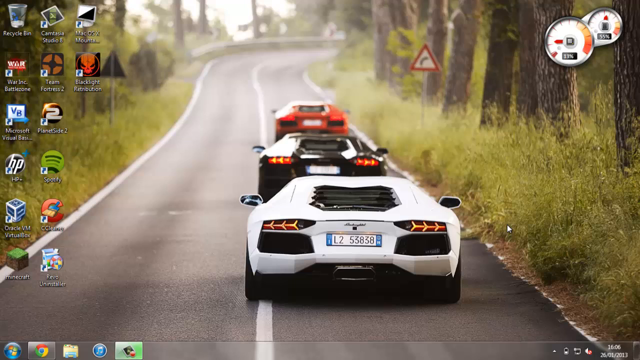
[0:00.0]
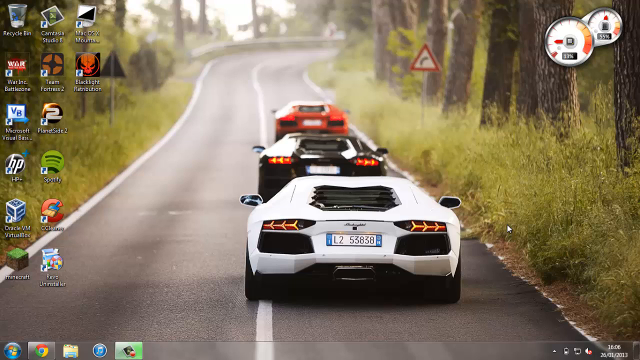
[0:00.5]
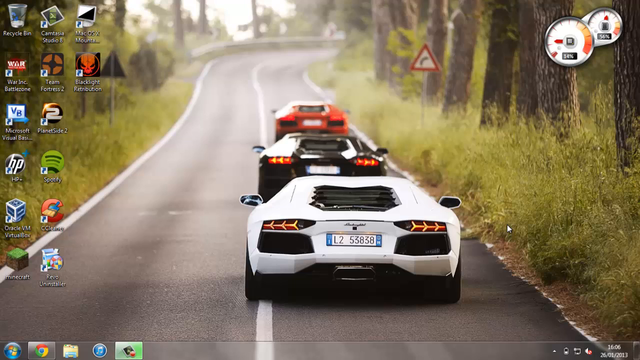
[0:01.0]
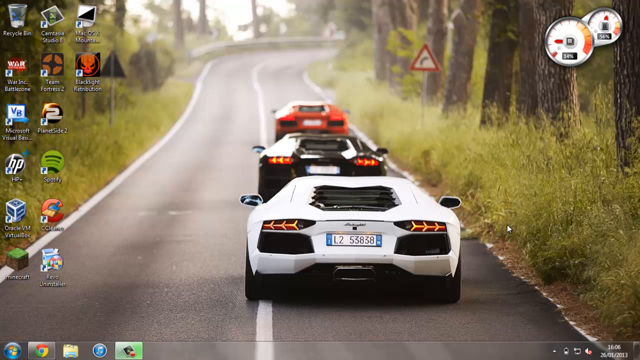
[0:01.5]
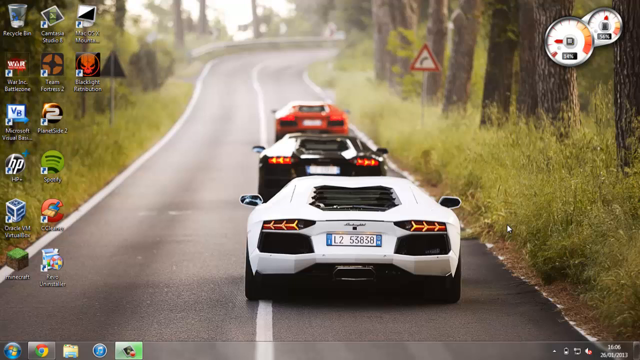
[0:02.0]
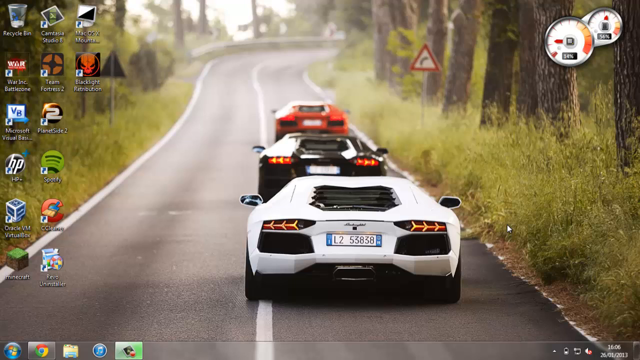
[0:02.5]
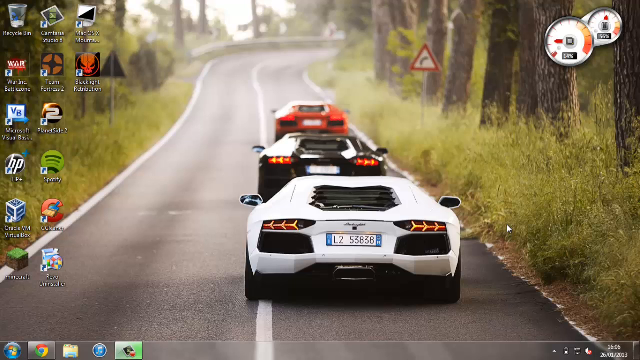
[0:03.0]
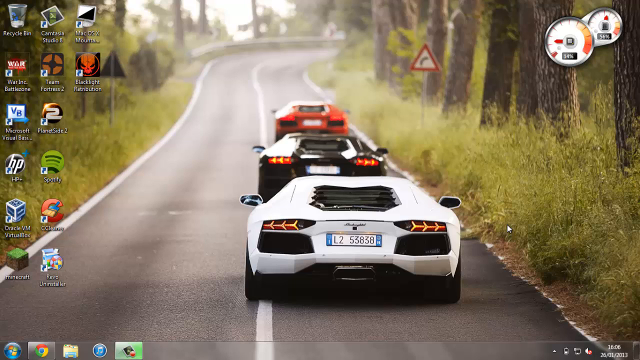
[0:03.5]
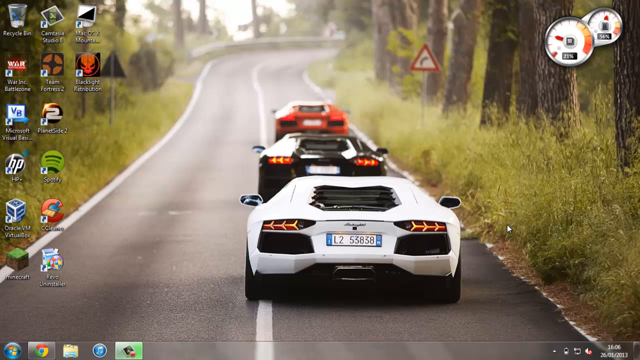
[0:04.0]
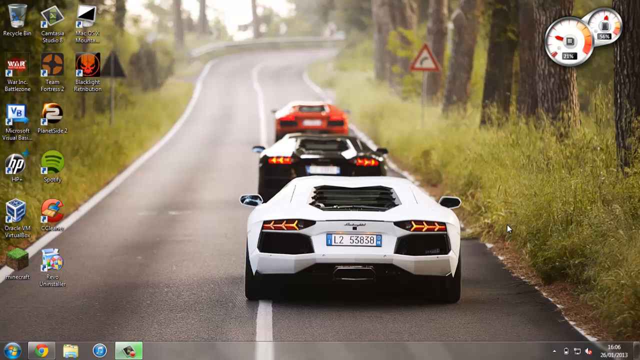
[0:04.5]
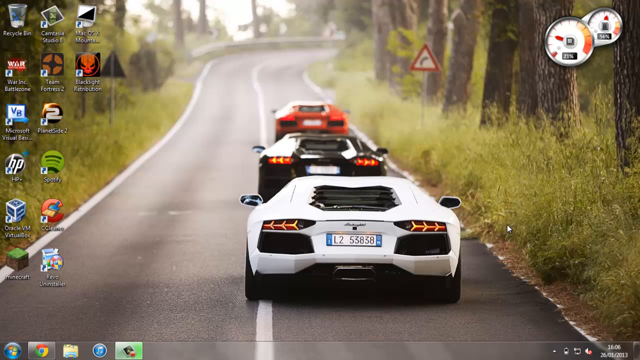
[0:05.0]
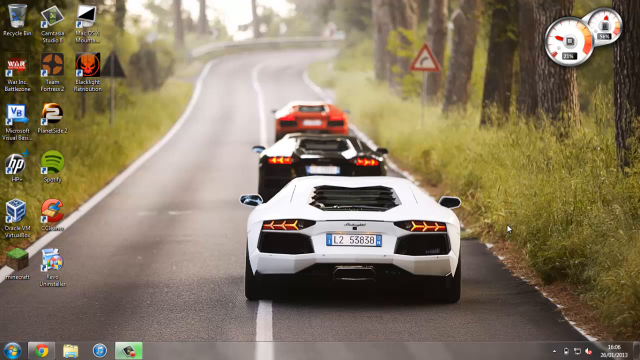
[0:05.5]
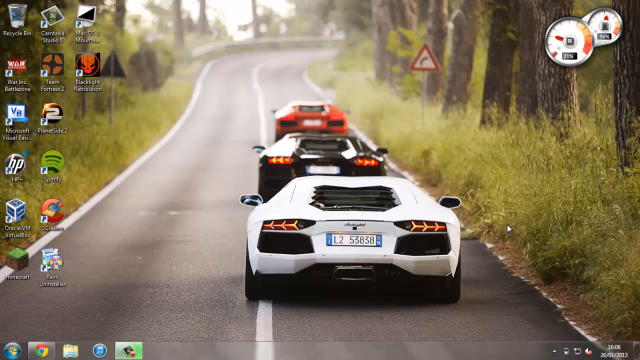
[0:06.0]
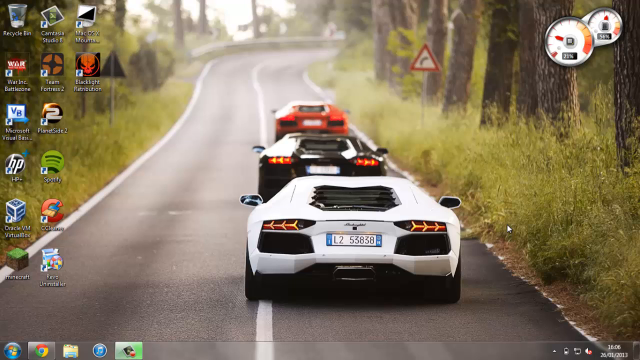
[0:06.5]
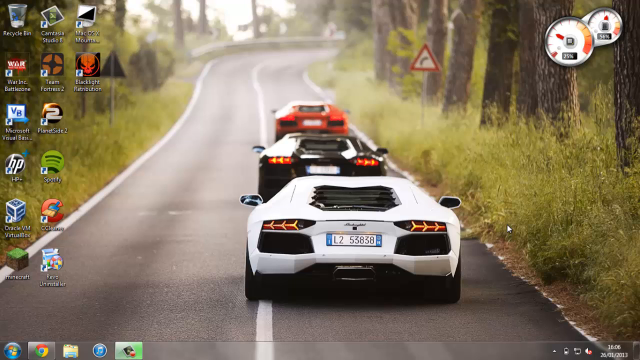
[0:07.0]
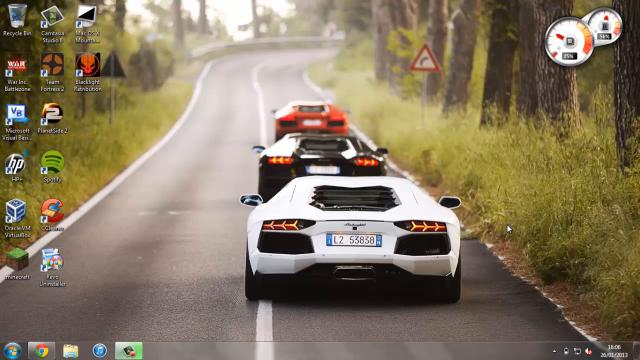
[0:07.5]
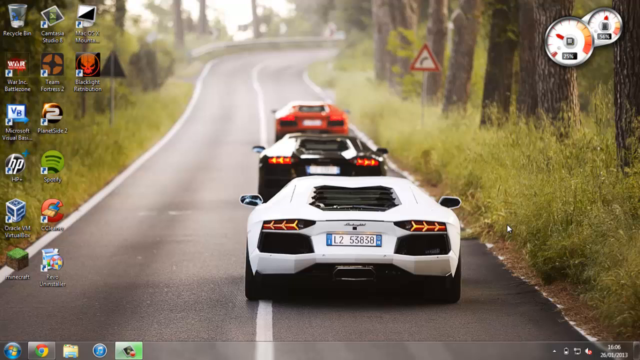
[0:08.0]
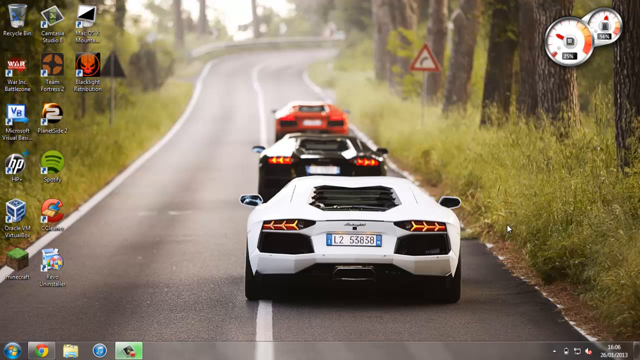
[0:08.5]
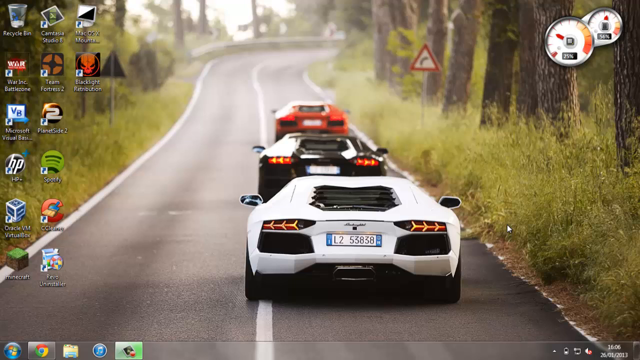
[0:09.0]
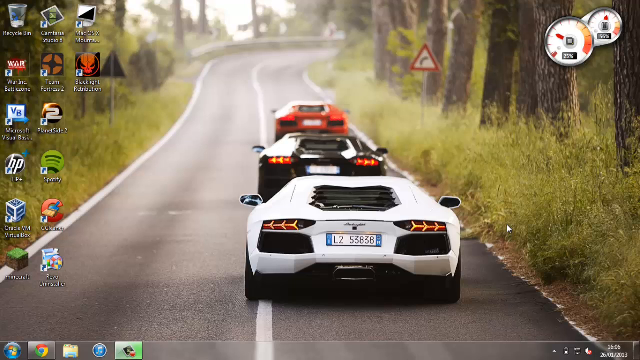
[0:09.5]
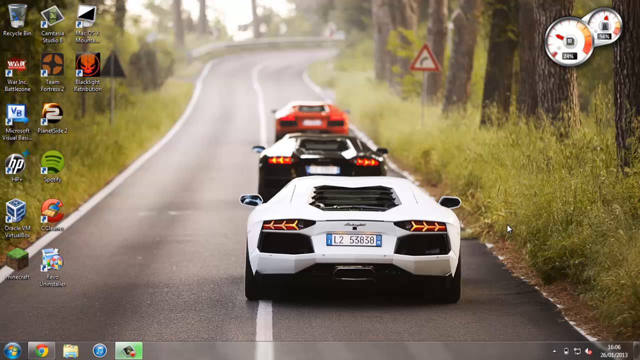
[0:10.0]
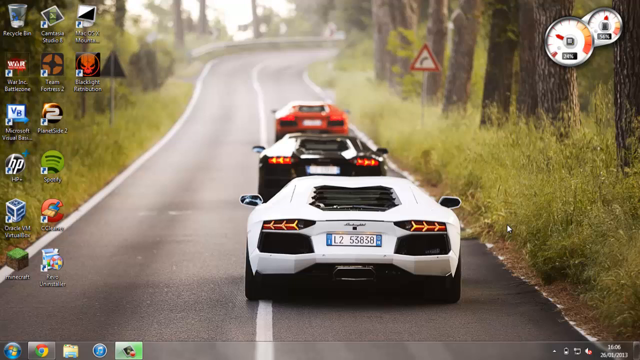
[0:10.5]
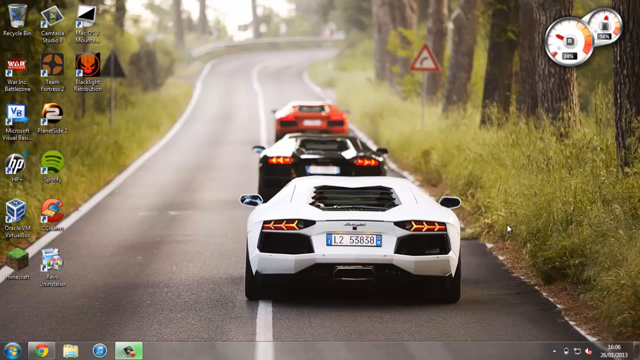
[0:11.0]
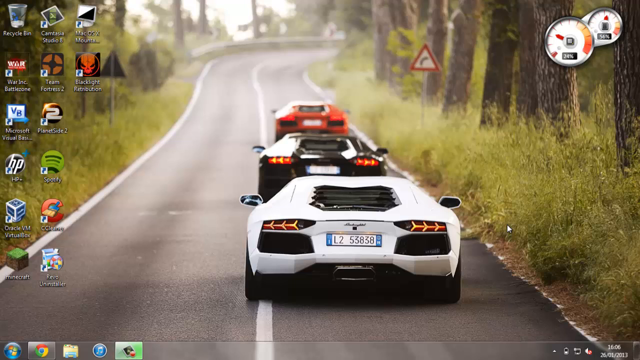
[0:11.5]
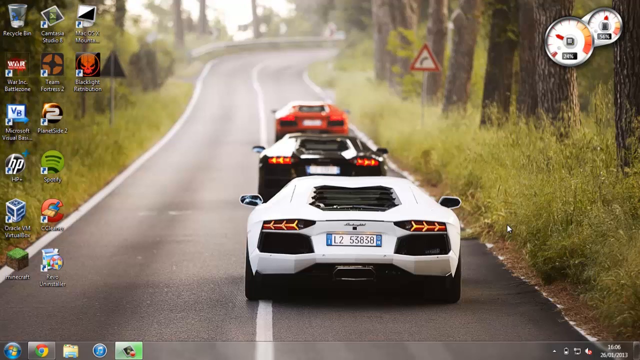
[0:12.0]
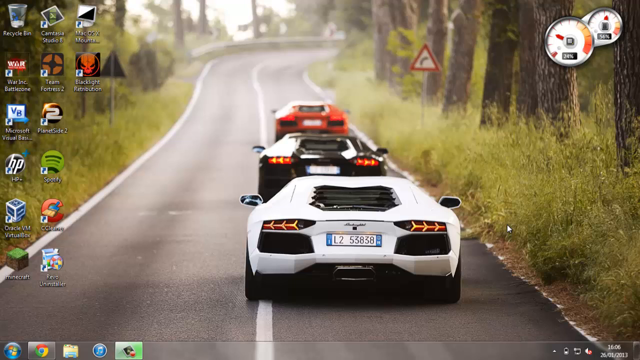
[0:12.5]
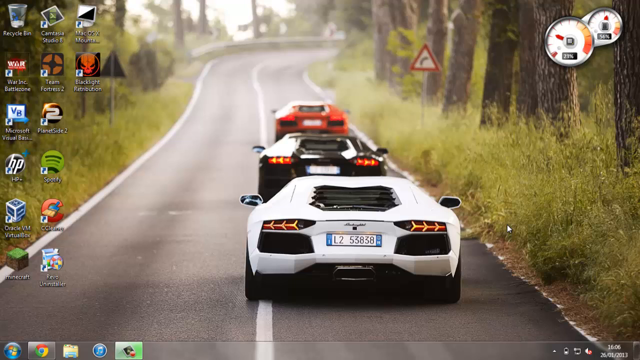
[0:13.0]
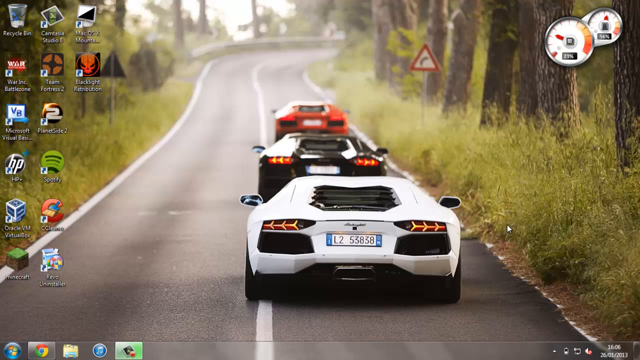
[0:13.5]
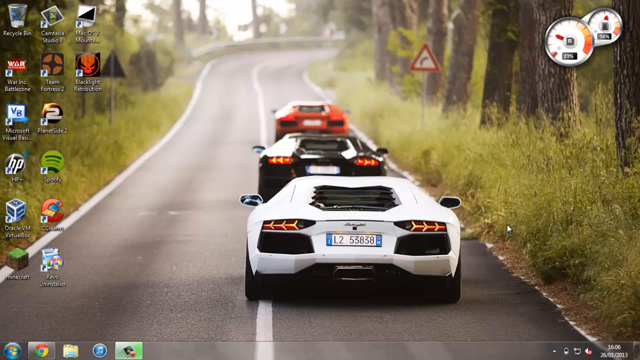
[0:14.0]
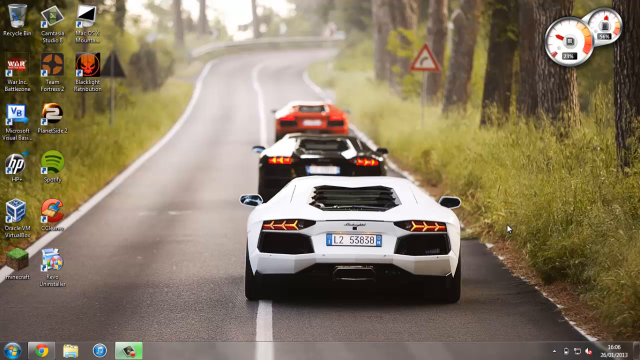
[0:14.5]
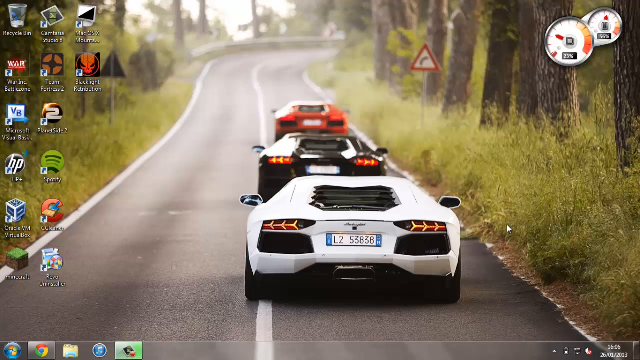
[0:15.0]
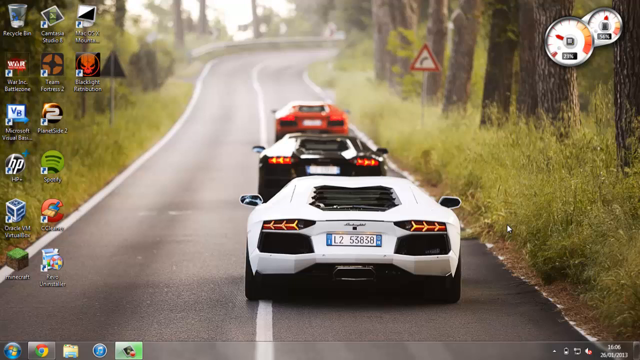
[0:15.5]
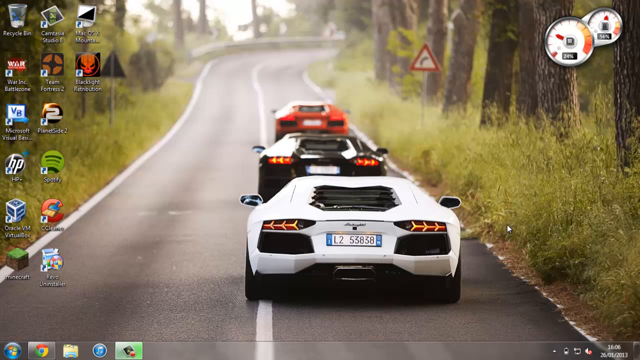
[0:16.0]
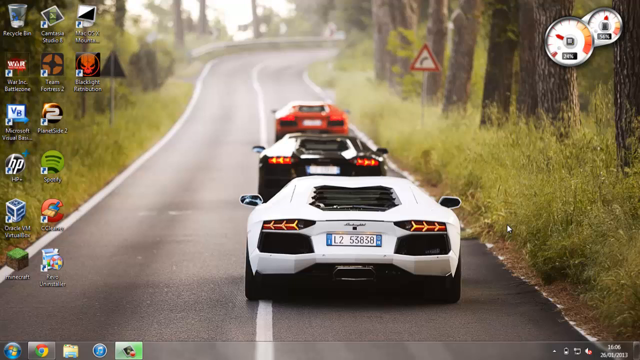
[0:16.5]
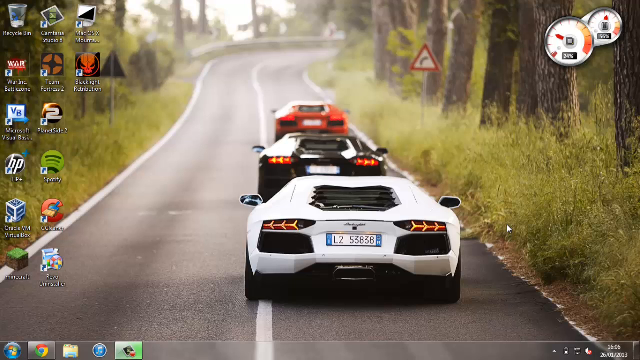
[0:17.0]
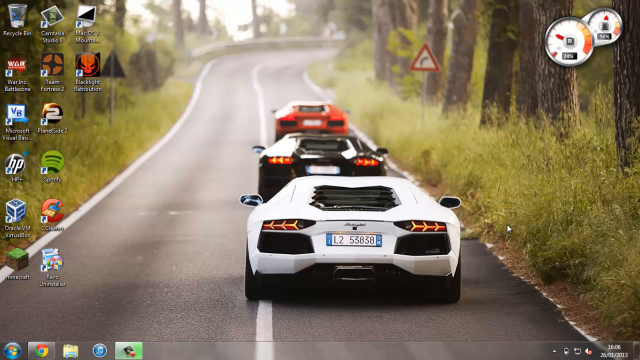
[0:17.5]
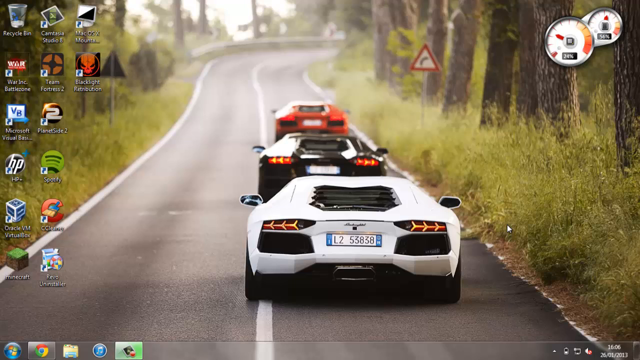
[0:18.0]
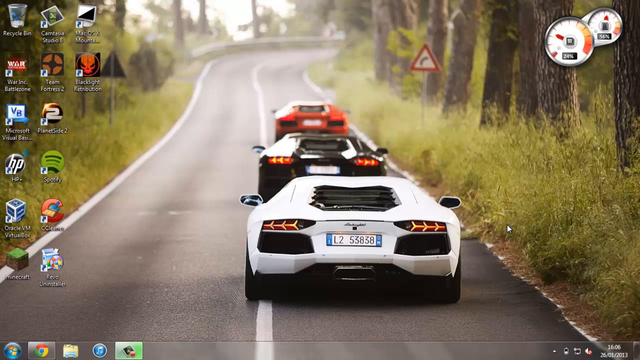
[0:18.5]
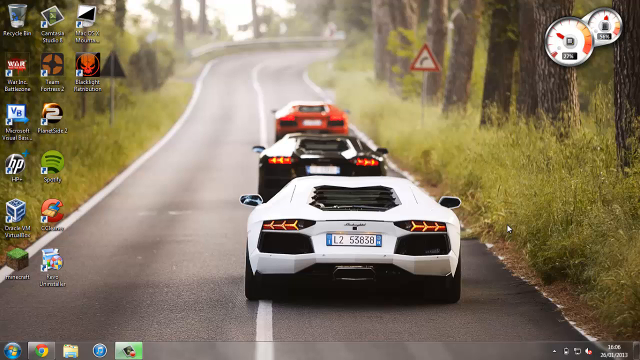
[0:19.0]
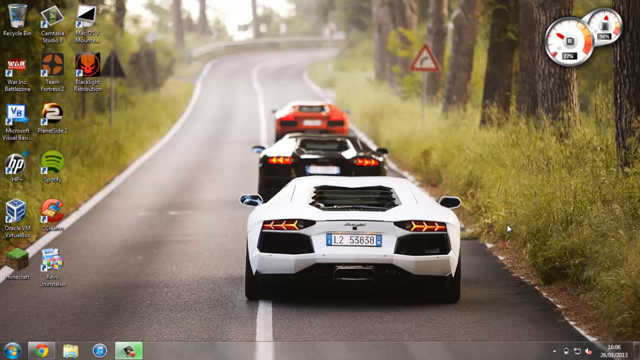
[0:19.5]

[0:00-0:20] The video opens on a Windows Vista desktop. In the bottom right corner of the taskbar, the time reads 16:06 and the date is 26-01-2013. The volume is shown as muted, there is an icon indicating a LAN cable connection, to its left a battery that is half full, and to the left of that a triangle. On the left side of the taskbar is the Windows Vista icon, followed by the Chrome icon, the first on the taskbar, which is highlighted to show an open window. Next come a folders/files icon and iTunes, then another icon showing a sort of screen with a green gradient, which possibly indicates that a file is being transferred or something is in progress. In the upper right corner are two gauges that maybe measure CPU and RAM use; the first reads 33% and the smaller one 55%. Desktop icons start in the top left with the Recycle Bin, followed below by 4ink Battlezone, Microsoft Visual Basics, HP+, Oracle VM VirtualBox and Minecraft. The next column holds Camtasia Studio 7, Team Fortress 2, Planetside 2, Spotify, CCleanup and Revo Uninstaller. The third column begins with Mac OS X and Mount.